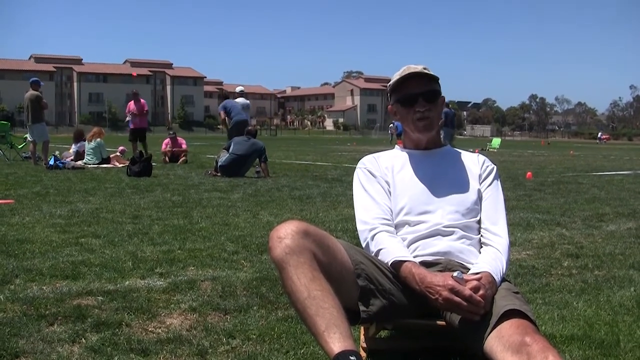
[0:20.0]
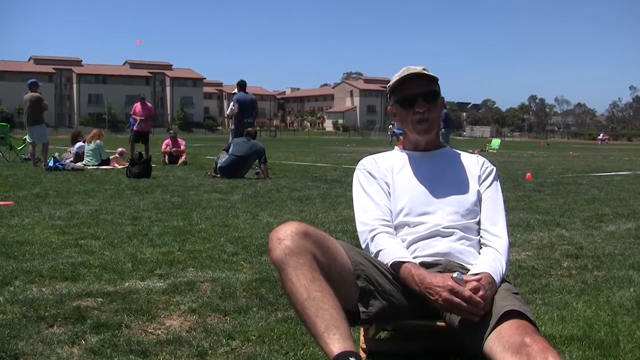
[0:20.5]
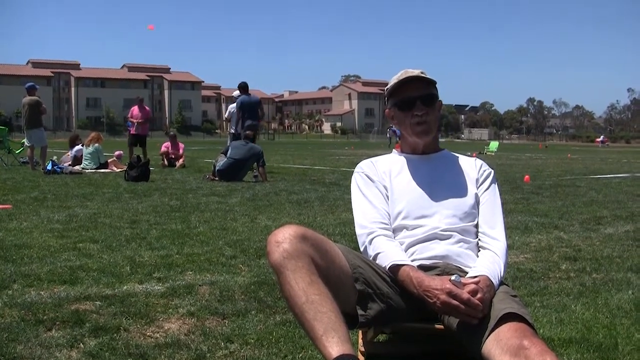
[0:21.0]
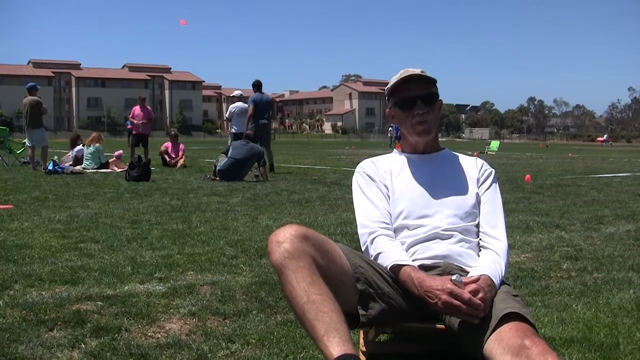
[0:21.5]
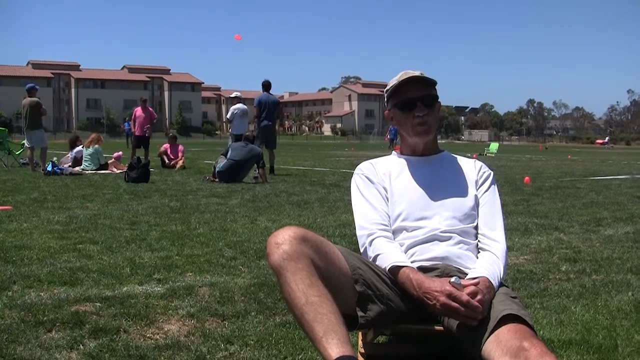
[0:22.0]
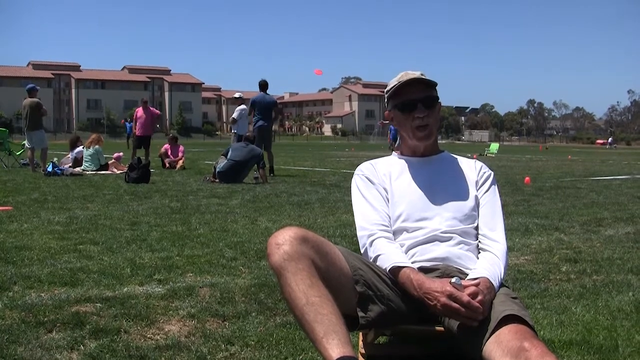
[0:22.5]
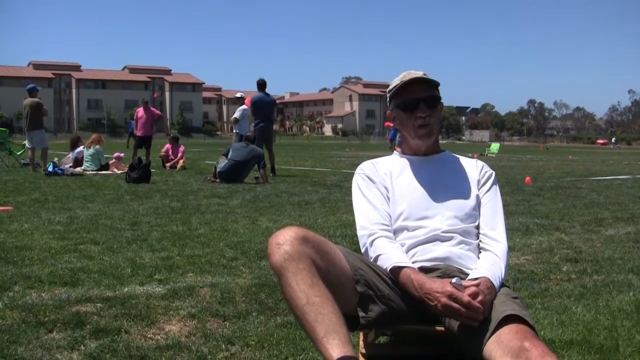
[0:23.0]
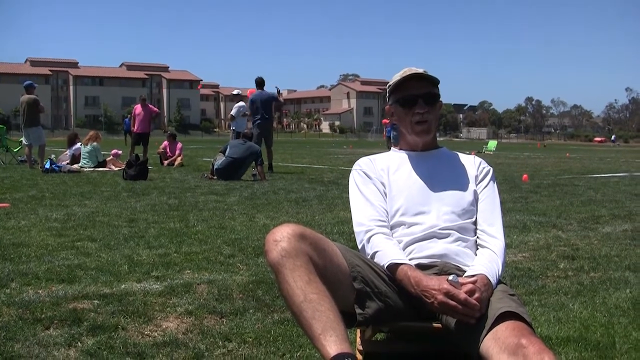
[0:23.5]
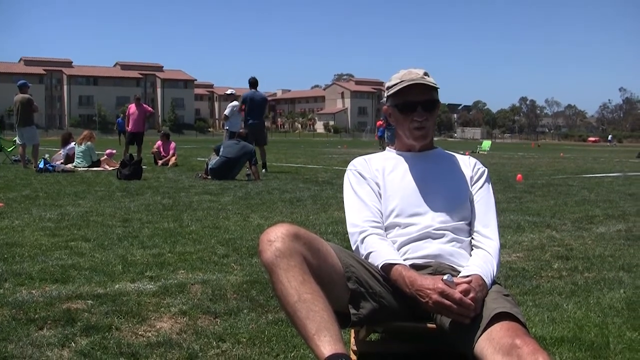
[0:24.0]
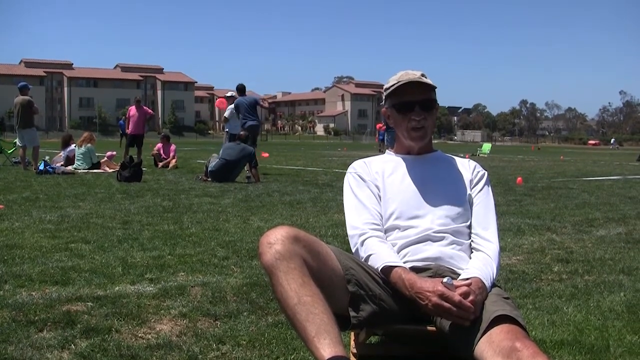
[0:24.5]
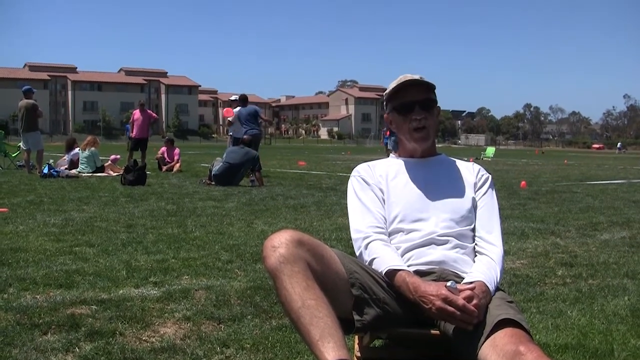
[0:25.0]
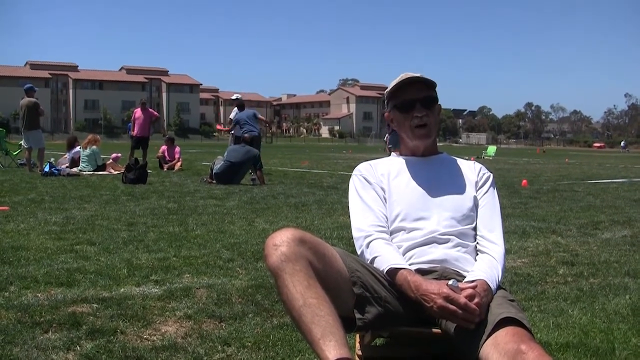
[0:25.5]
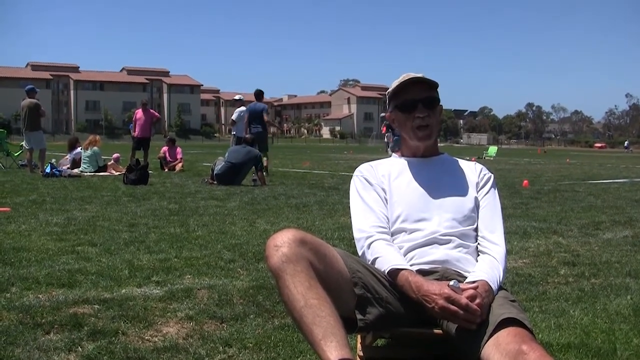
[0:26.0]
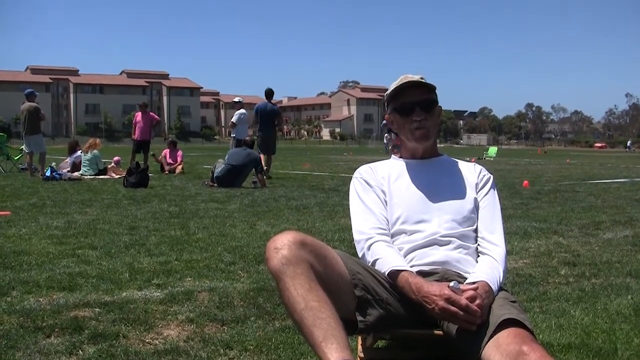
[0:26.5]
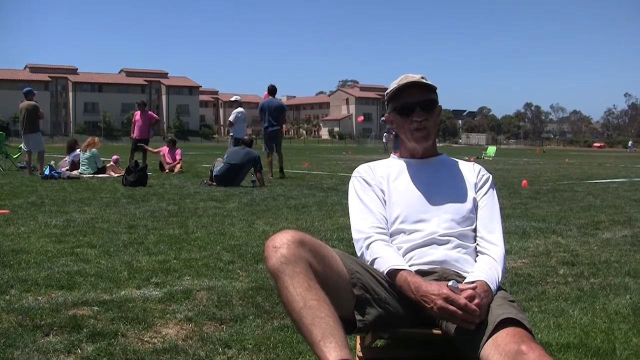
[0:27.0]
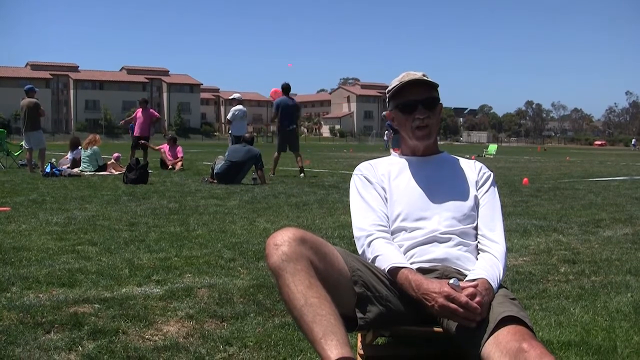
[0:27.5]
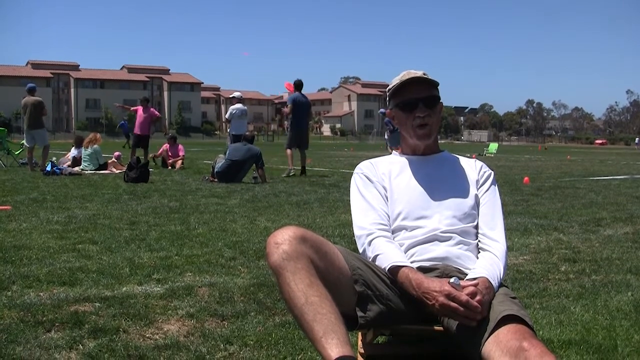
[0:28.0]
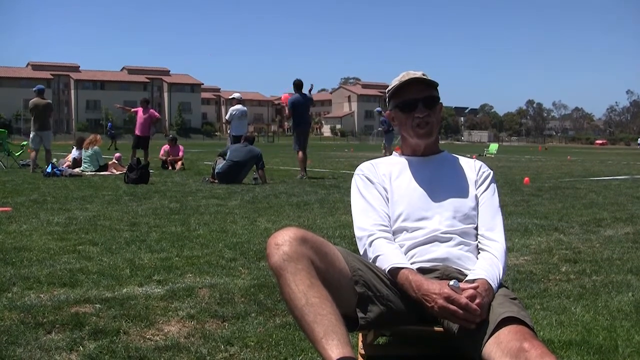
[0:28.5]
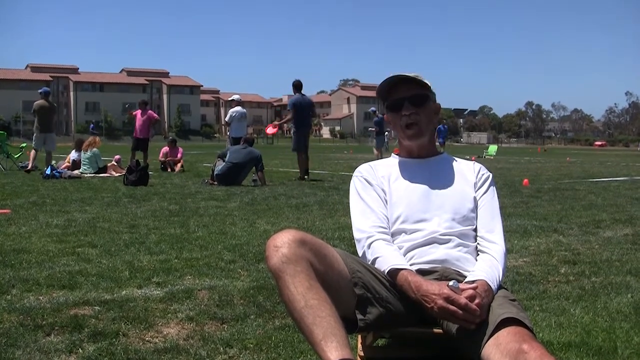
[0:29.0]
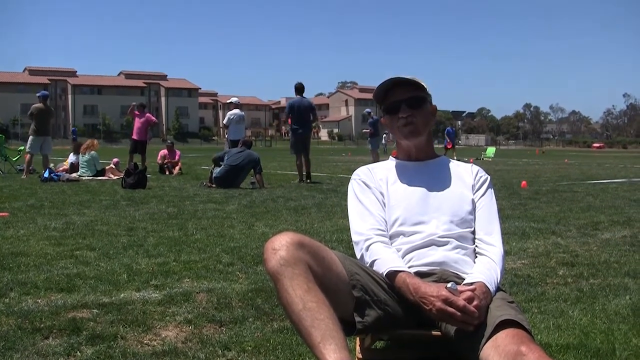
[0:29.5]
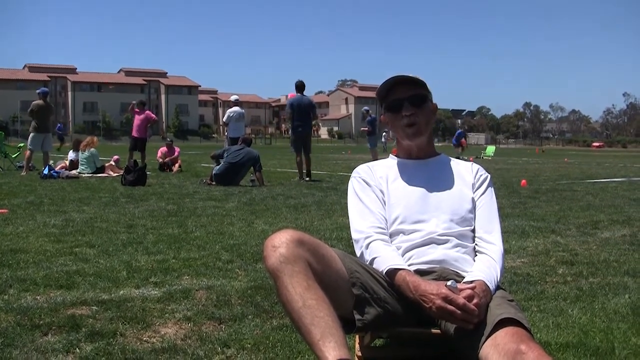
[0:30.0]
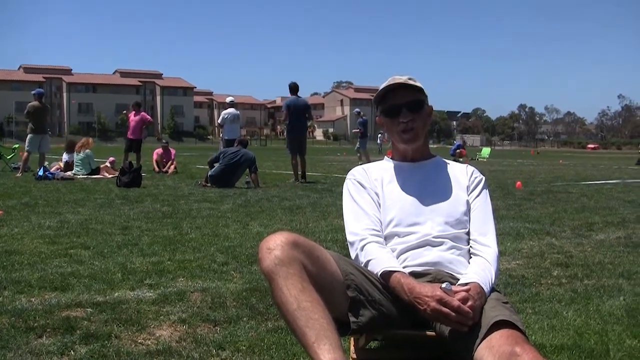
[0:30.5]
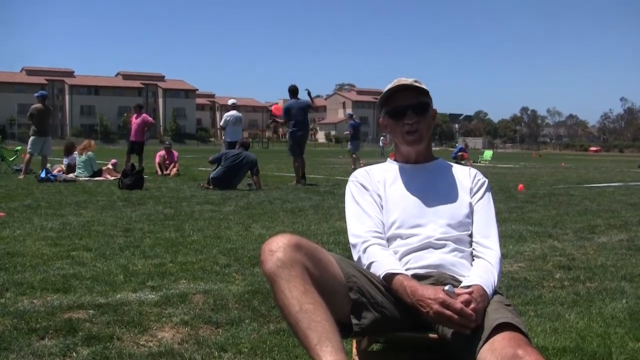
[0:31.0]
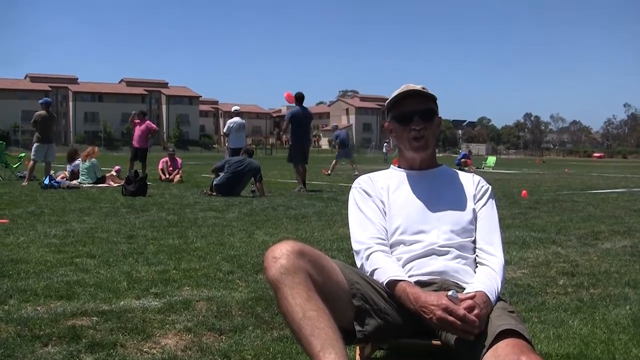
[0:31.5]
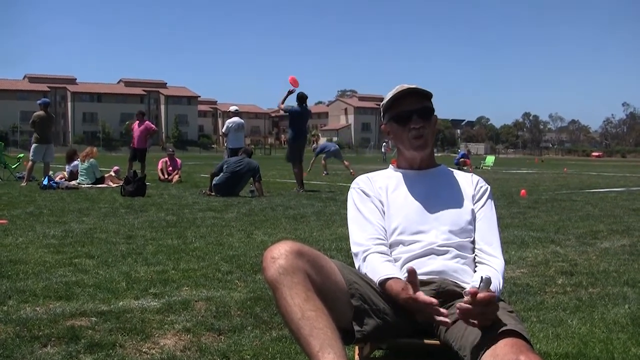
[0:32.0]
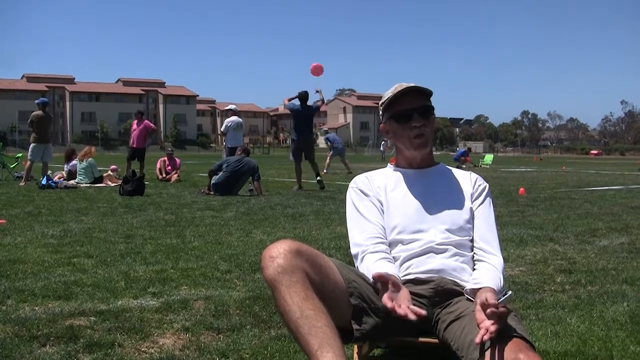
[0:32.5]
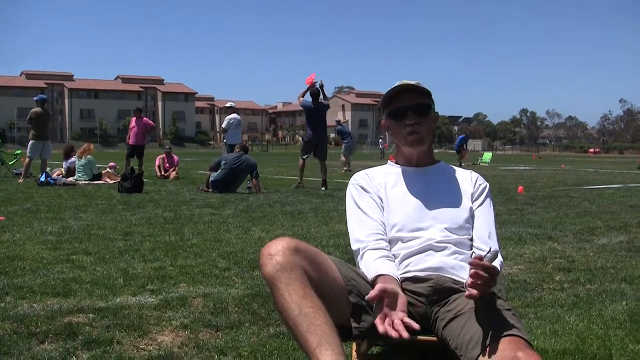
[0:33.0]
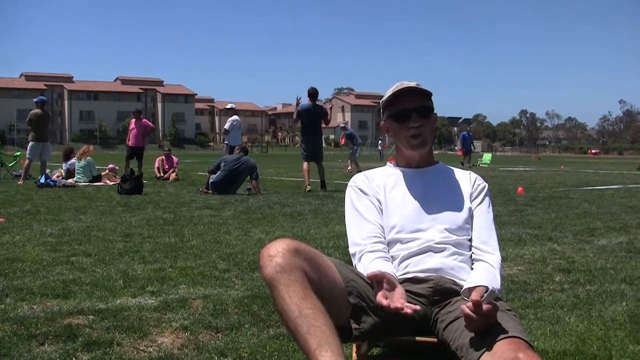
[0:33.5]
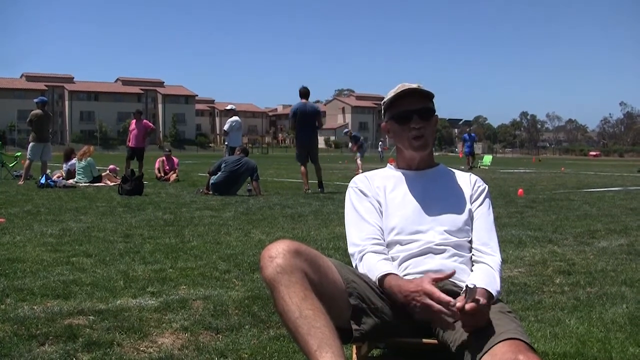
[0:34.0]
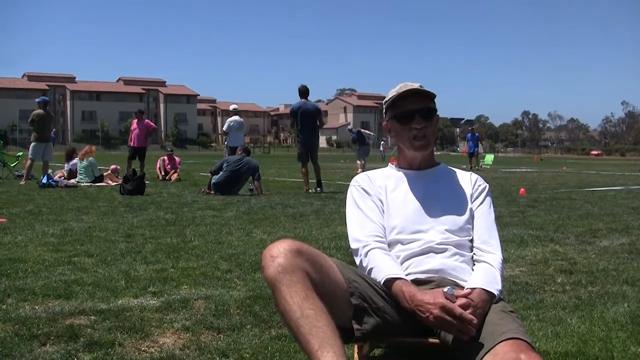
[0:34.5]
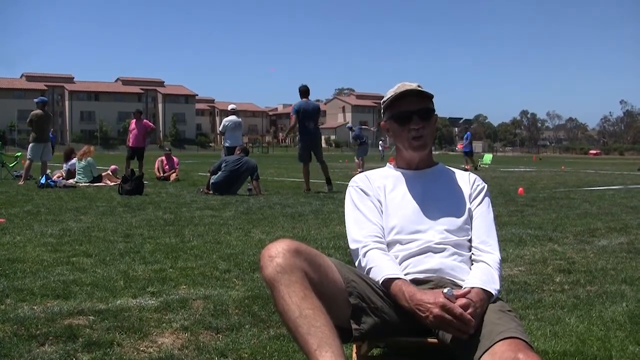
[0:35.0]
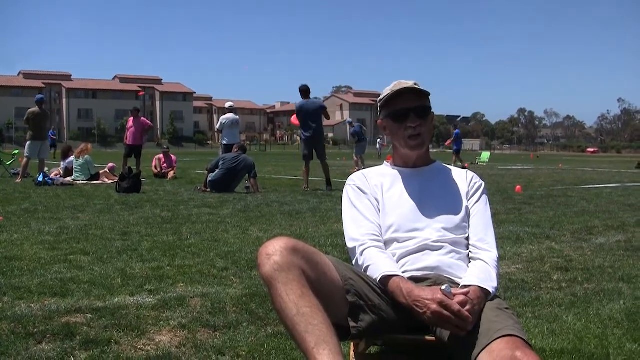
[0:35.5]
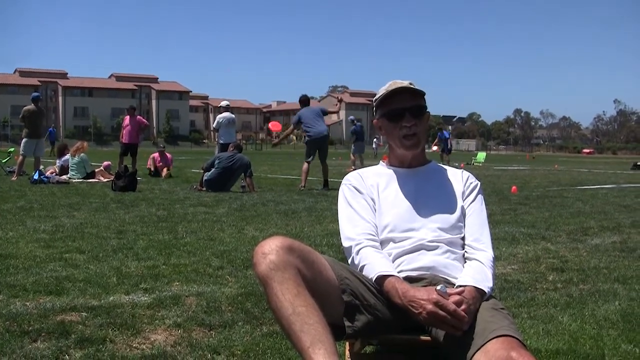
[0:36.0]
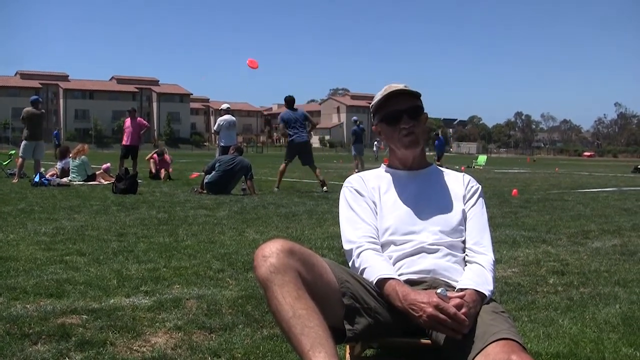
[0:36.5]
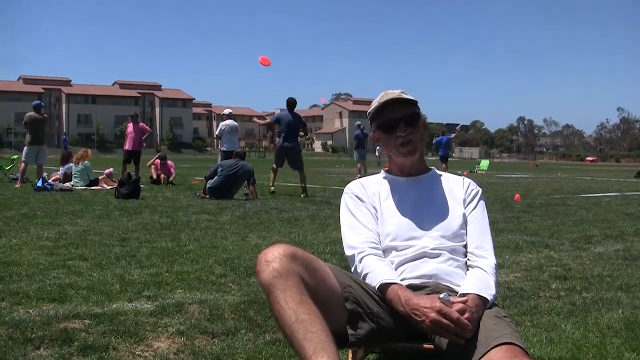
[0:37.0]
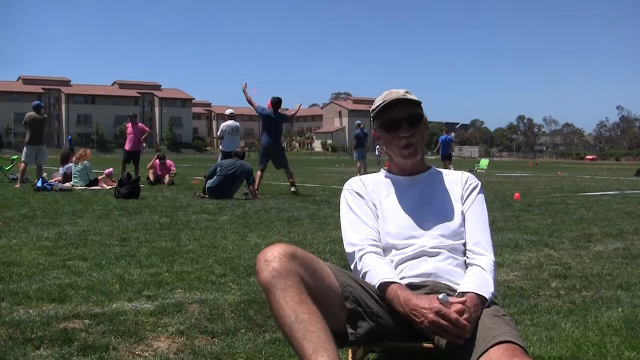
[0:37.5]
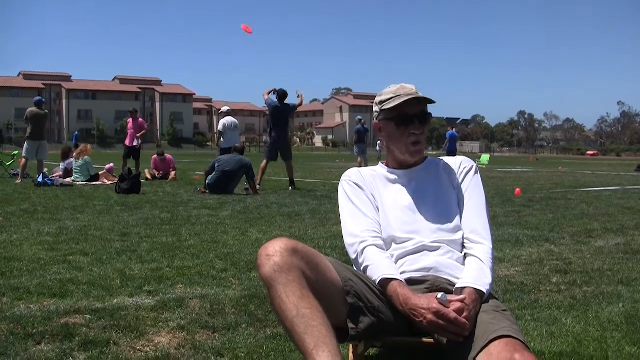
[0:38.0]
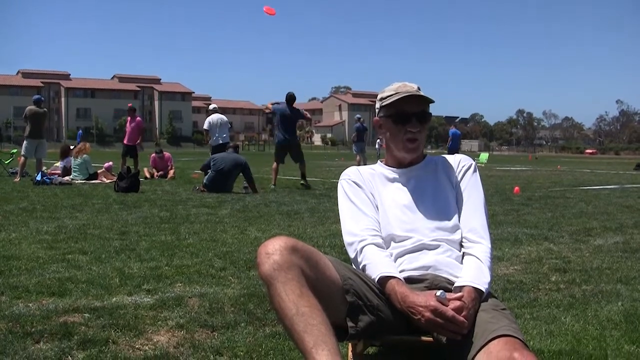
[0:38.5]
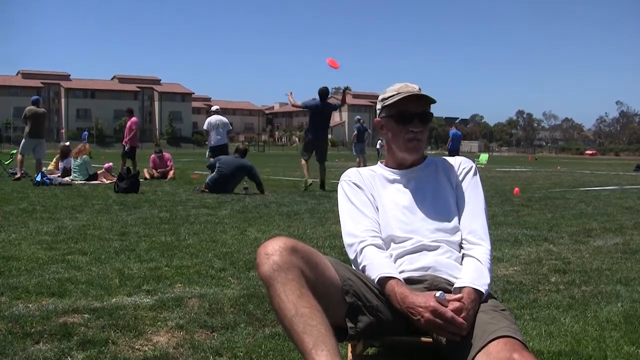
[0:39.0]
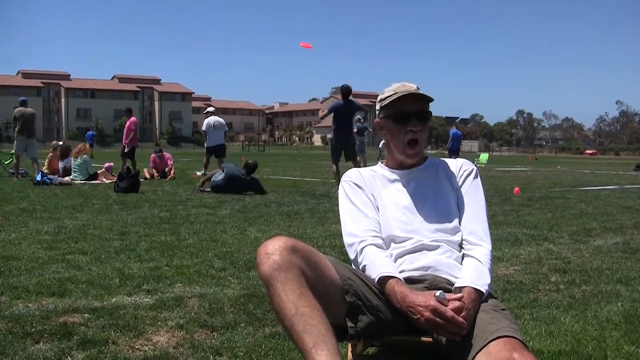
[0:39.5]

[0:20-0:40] The person in the white long-sleeve shirt and khaki shorts is still being interviewed, apparently seated in a low chair. Their legs are askew, with the right leg bent at the knee going one direction and the left leg straight, and they still appear to be holding a silver microphone in their left hand, with their hands down on their lap. In the background, several more people seem to have Frisbees that they are throwing around. There appear to be pairs: in one pair, one person stands and one sits, and one of them appears to be playing with the Frisbee, tossing it around in both hands. Near the green lawn chair that looks to be in the middle of the field, another person is moving the white rope or ribbon that marks off the field; the rope or ribbon perhaps marks yard lines or rectangular areas. About half the people are sitting and half are standing, and they appear to be both male and female. At least three or four pairs toss Frisbees; some play with them individually, while others look to be tossing them to a partner across the field. Some people appear to be sitting on blankets having conversations.